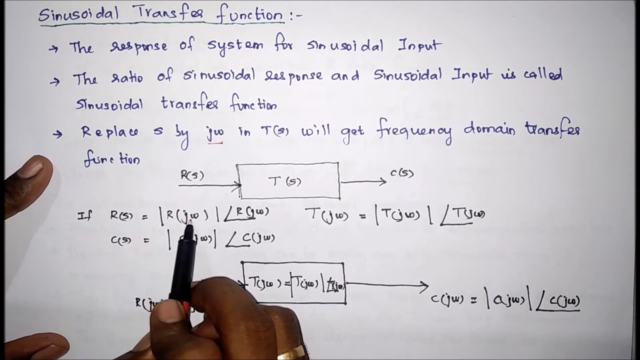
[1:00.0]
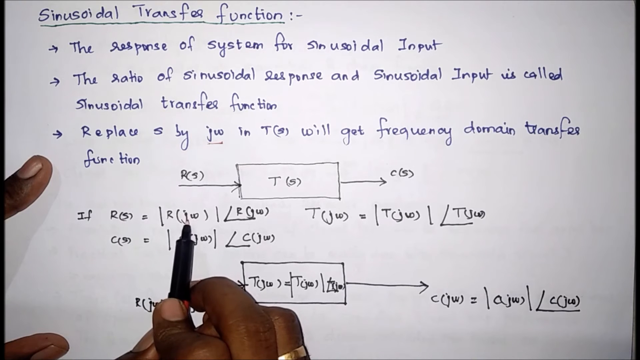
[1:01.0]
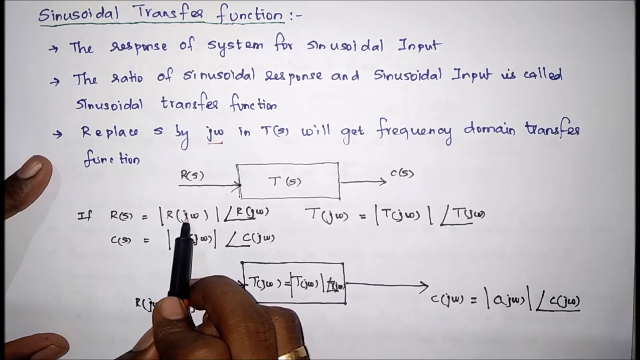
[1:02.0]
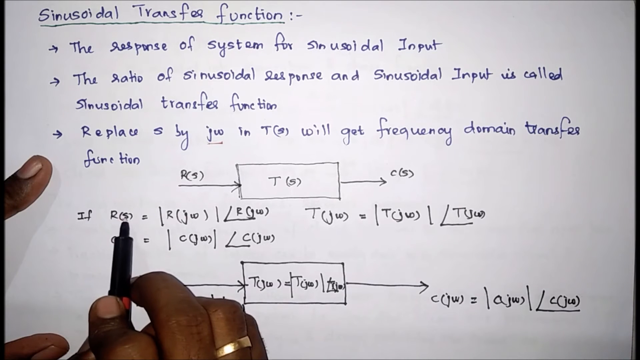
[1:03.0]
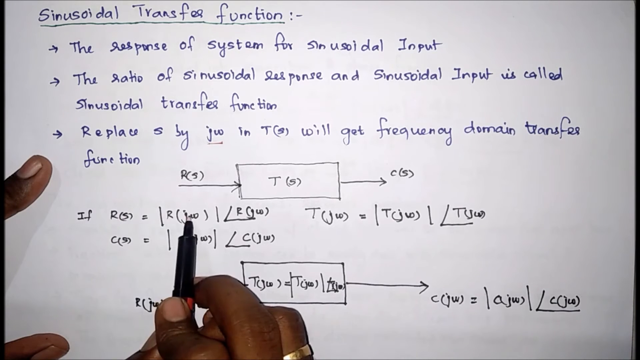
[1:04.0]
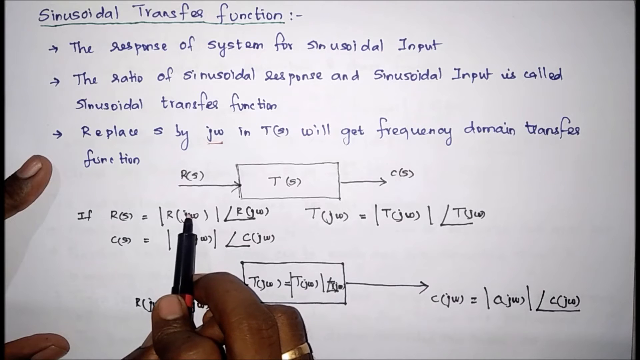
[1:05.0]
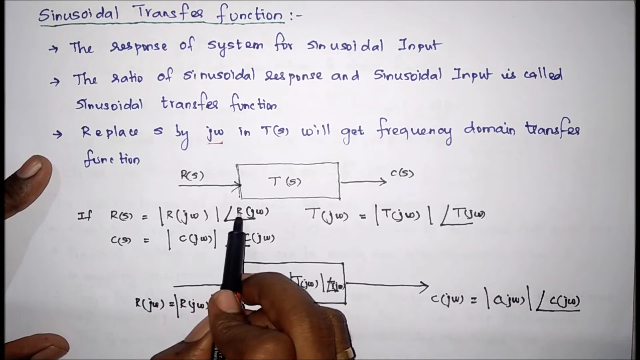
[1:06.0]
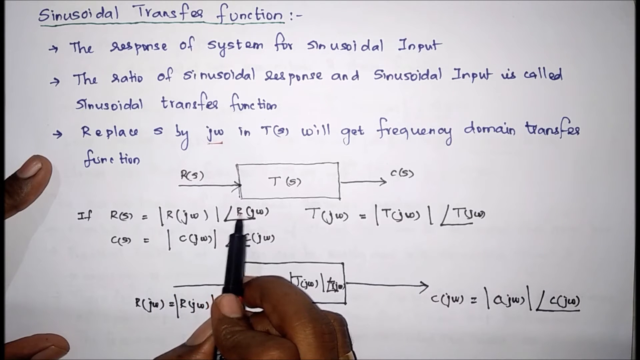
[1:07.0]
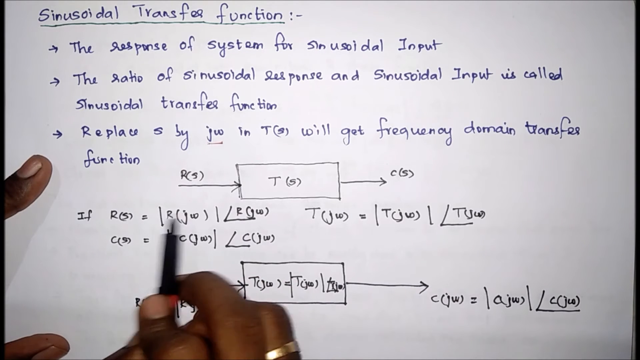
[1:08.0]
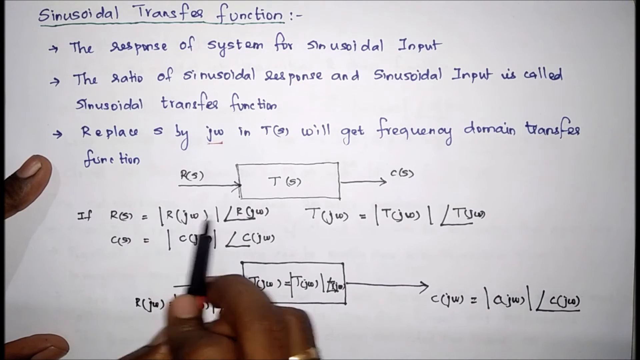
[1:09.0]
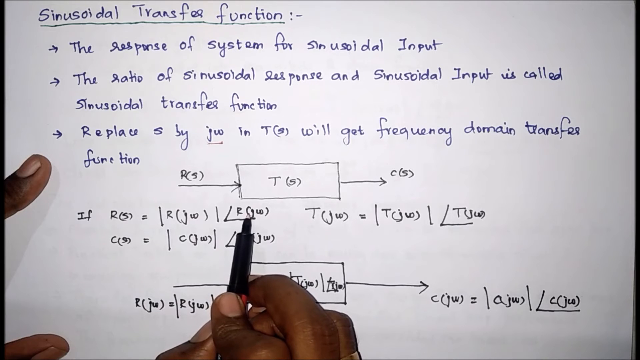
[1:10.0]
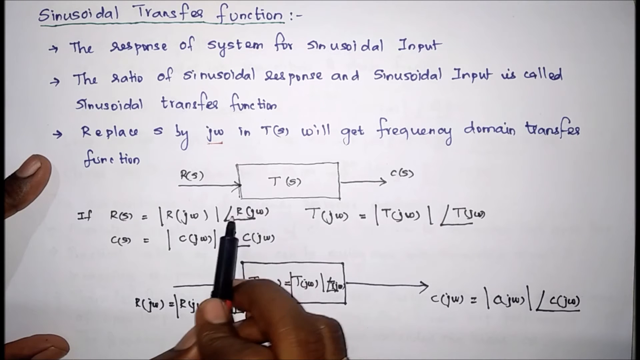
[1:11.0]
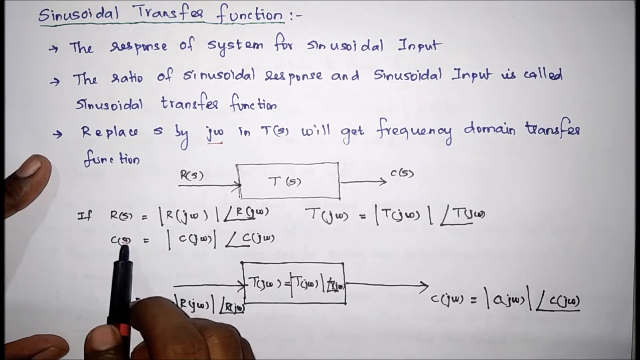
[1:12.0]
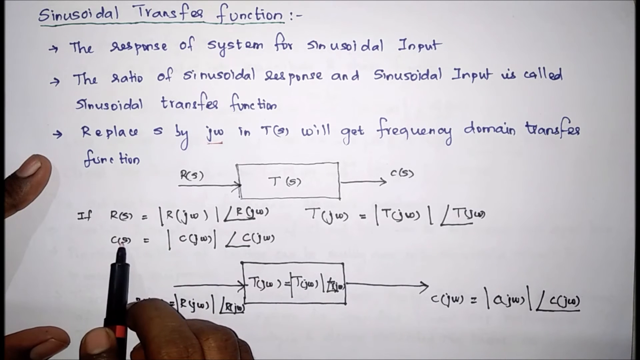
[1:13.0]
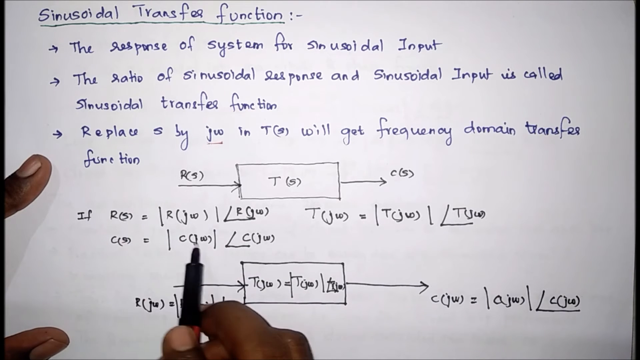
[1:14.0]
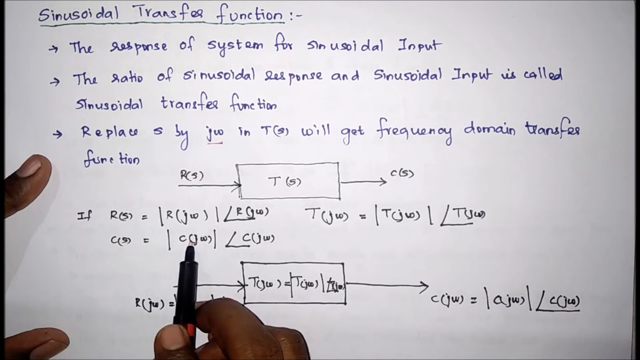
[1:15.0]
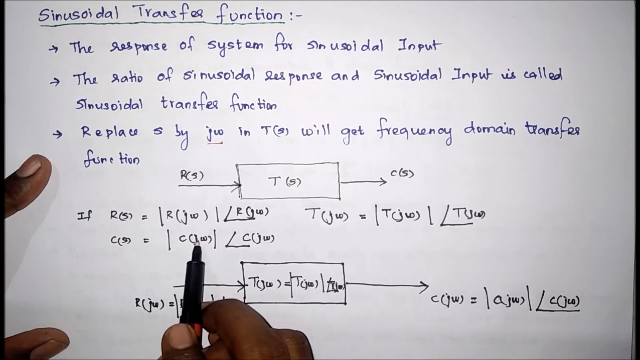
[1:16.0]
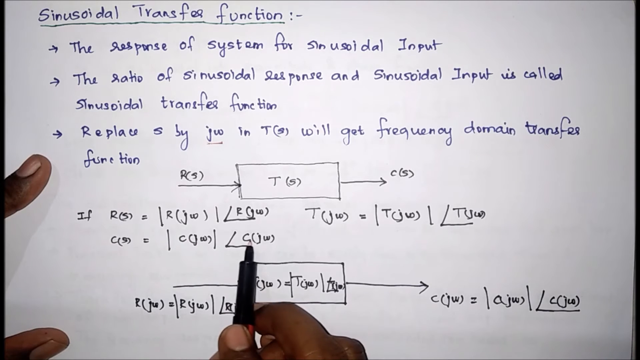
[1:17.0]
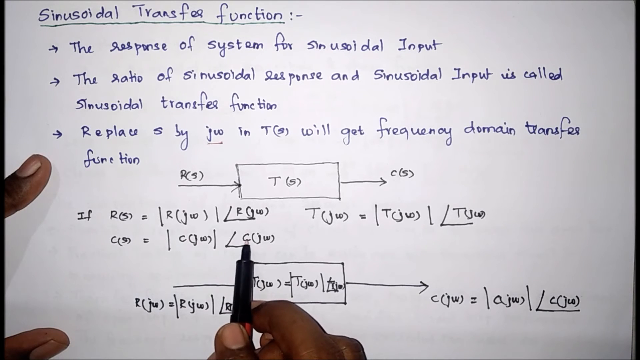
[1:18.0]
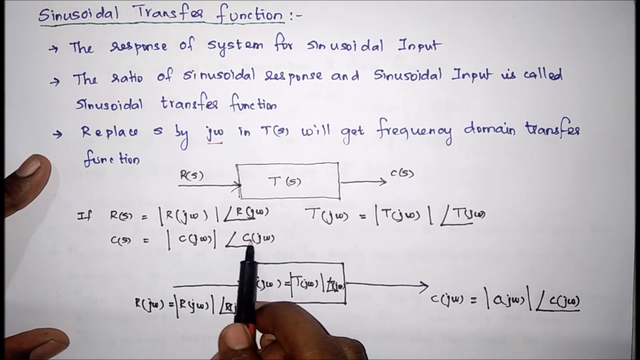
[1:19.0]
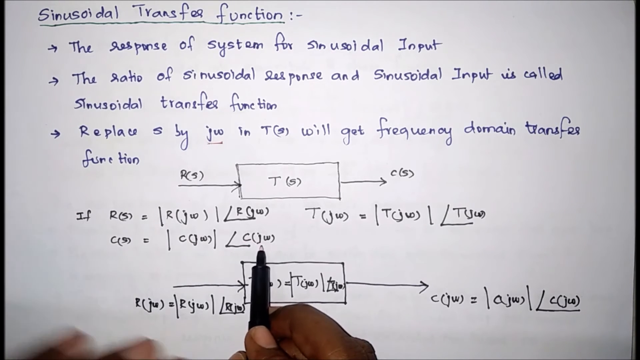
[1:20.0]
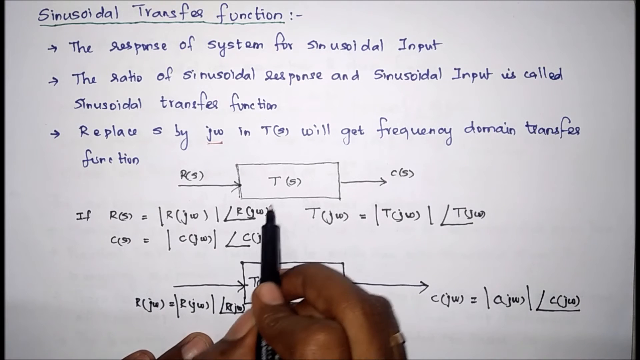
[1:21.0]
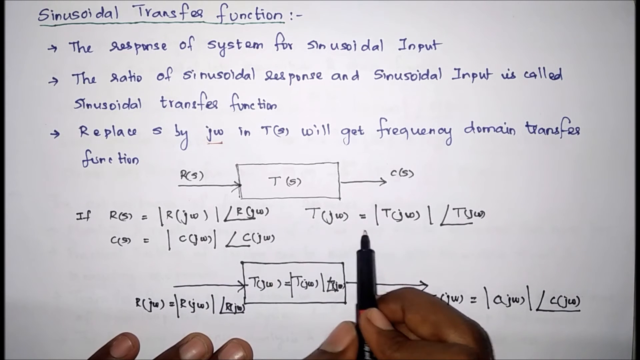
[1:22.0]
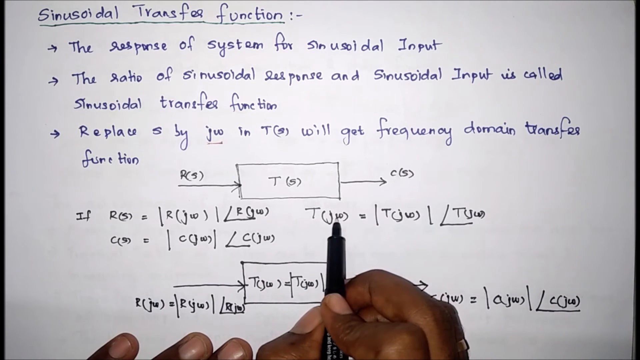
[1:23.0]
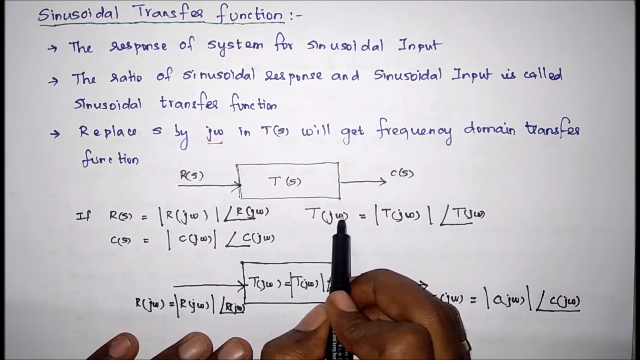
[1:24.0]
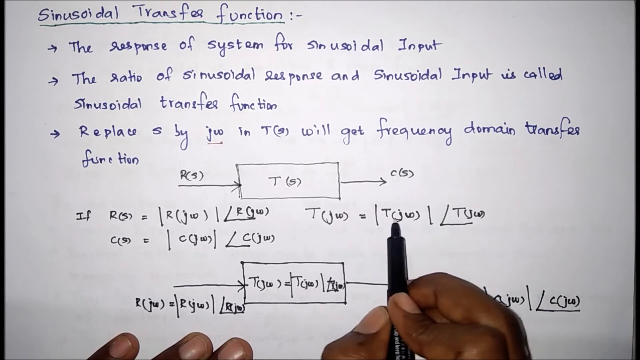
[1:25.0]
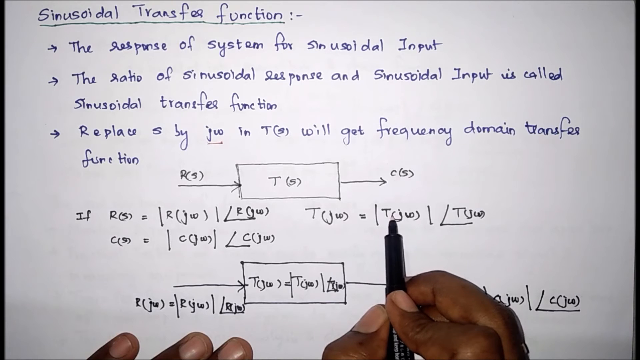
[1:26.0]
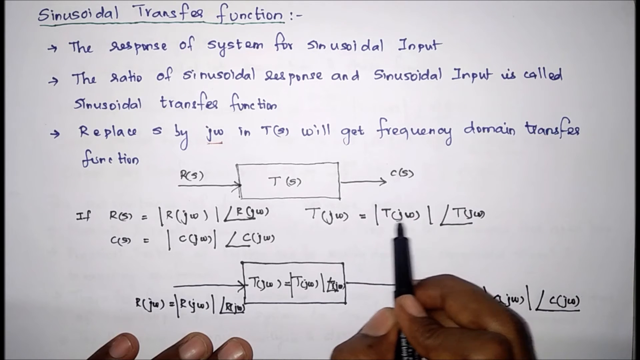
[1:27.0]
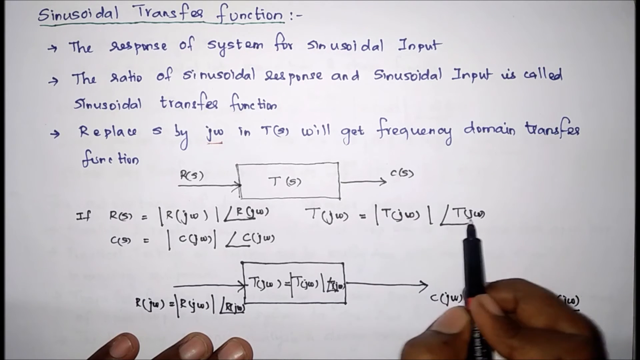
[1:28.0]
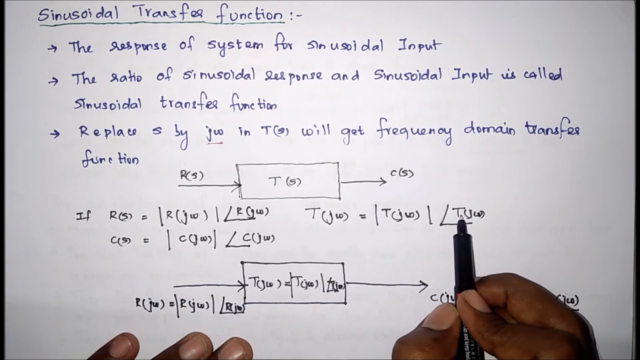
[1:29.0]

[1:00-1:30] The hand of a black person holds a black pen over a handwritten note; judging by the pen's movements, the person seems to be explaining a concept to their audience. The pen is in the right hand, and some fingers of the left hand are partially visible, resting mainly on the left side of the note. The note is titled "Sinusoidal Transfer Function," with statements in a bulleted list below the title. The person explains an equation with some variables written in the middle of the note. Slightly above this equation is a diagram showing P(s) going into what looks like a reaction, represented by a rectangle labeled T(s), and coming out as C(s), with an input arrow going into the rectangle and an output arrow coming out of it.